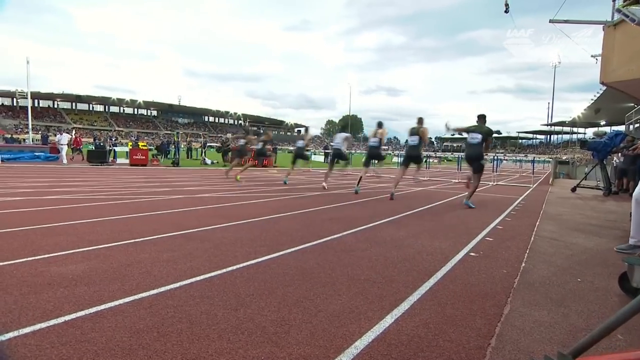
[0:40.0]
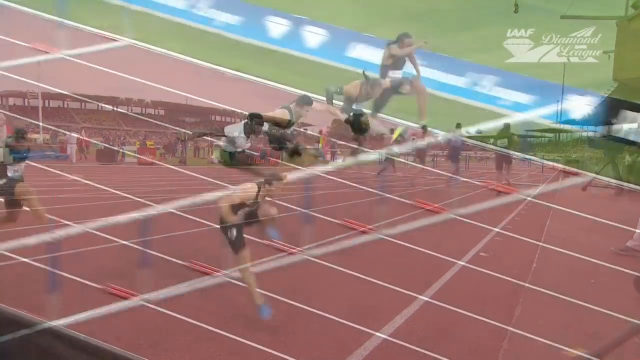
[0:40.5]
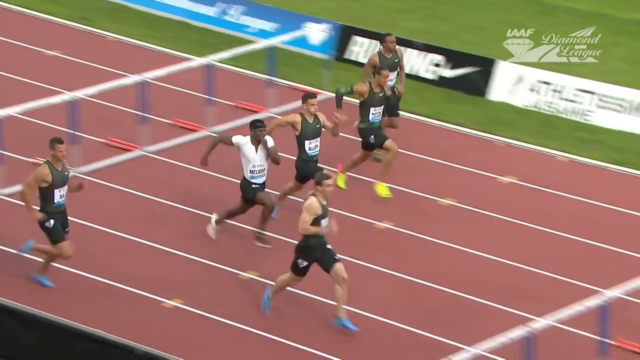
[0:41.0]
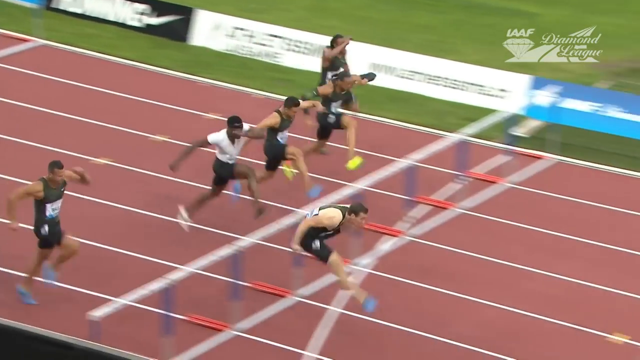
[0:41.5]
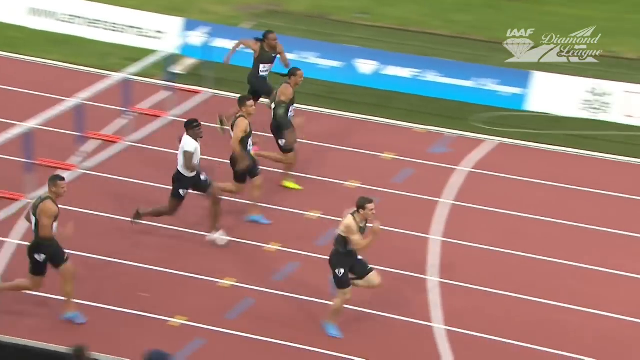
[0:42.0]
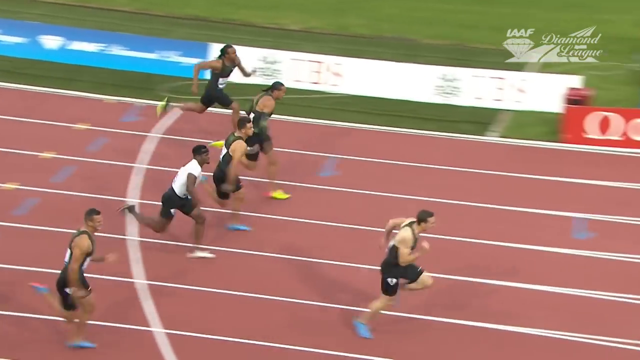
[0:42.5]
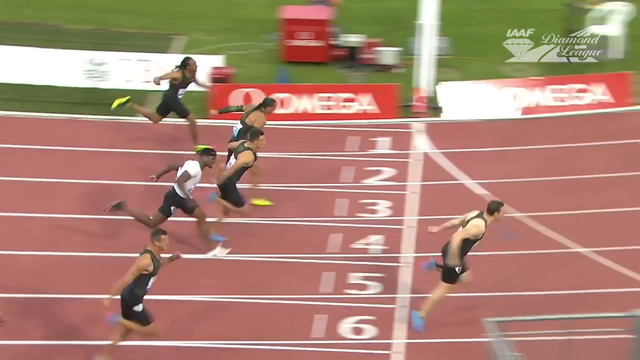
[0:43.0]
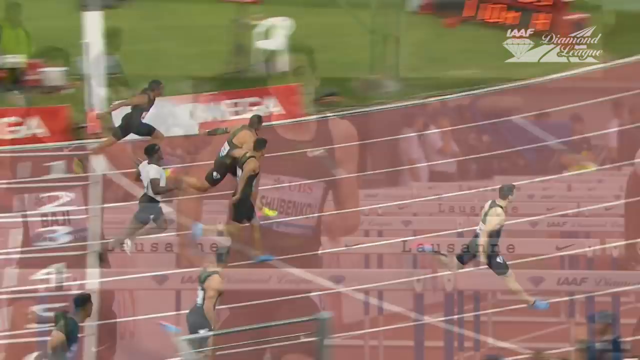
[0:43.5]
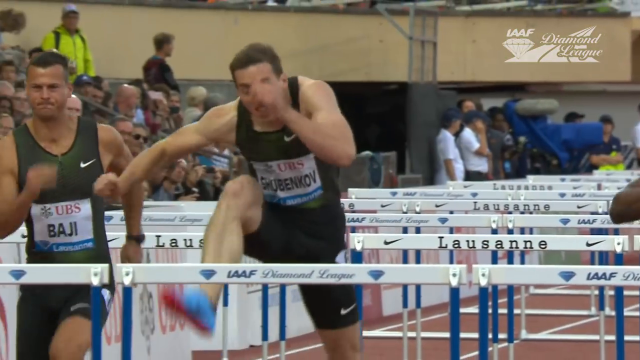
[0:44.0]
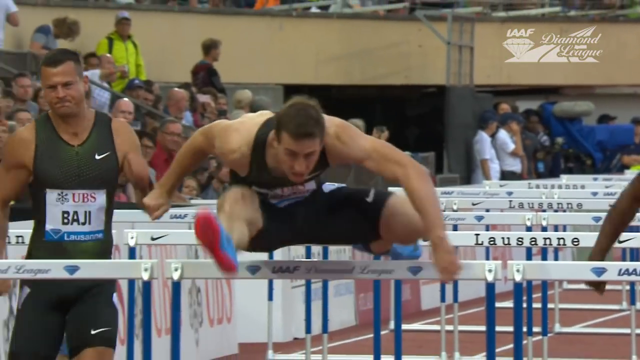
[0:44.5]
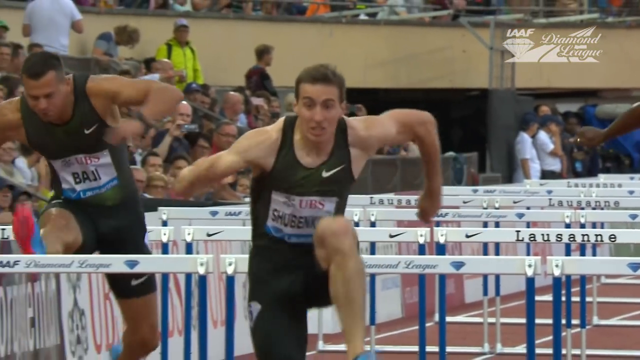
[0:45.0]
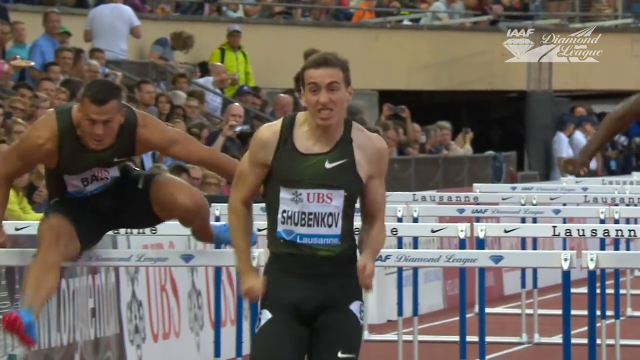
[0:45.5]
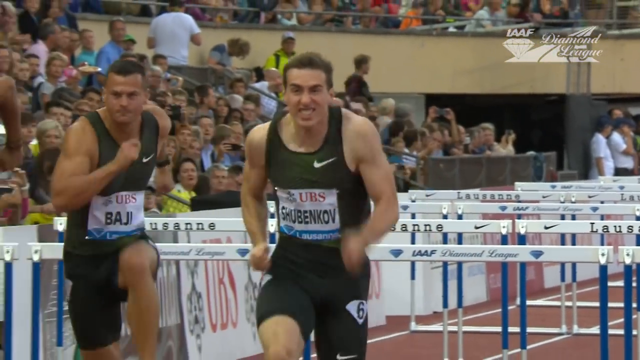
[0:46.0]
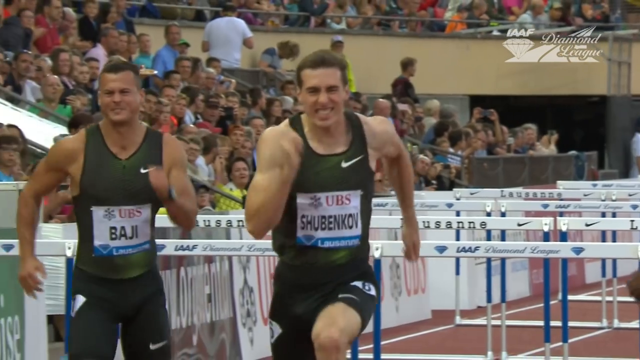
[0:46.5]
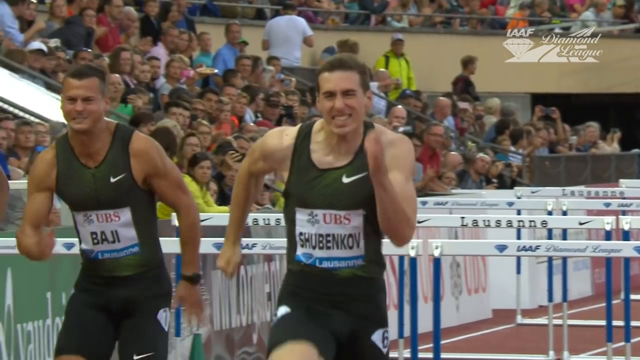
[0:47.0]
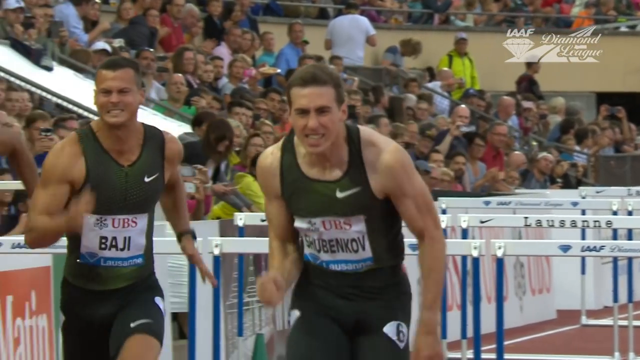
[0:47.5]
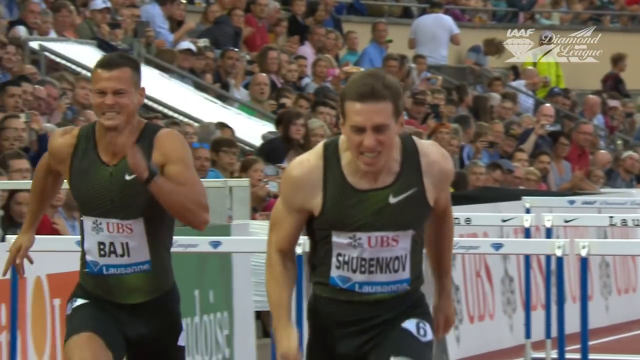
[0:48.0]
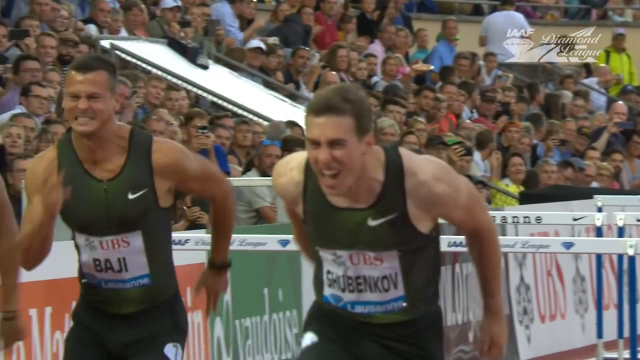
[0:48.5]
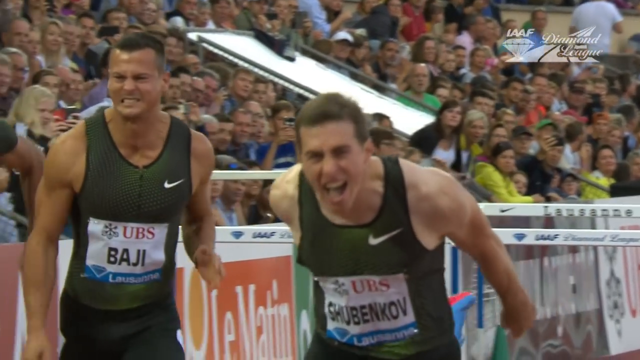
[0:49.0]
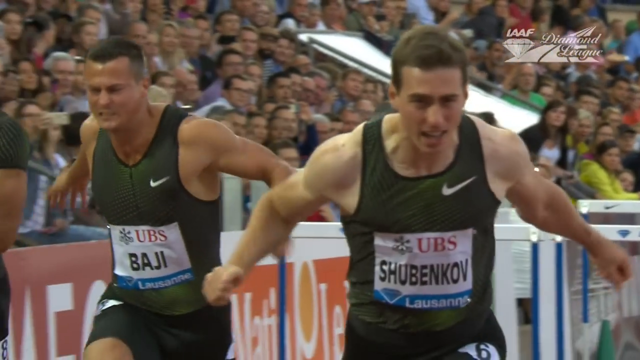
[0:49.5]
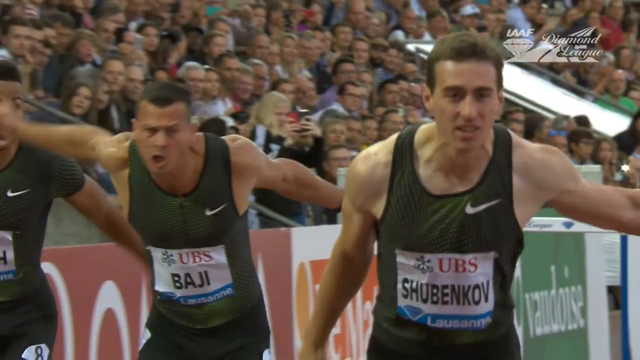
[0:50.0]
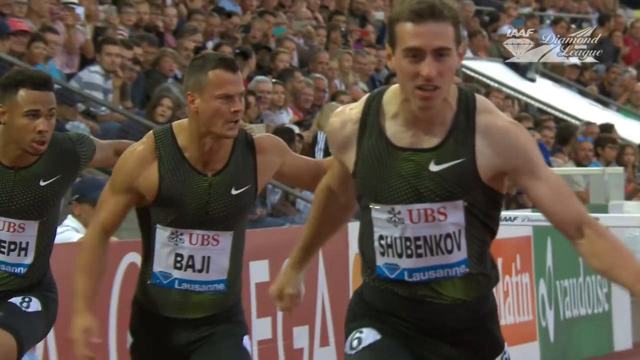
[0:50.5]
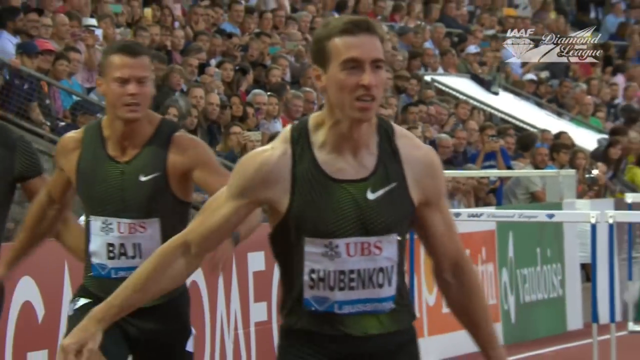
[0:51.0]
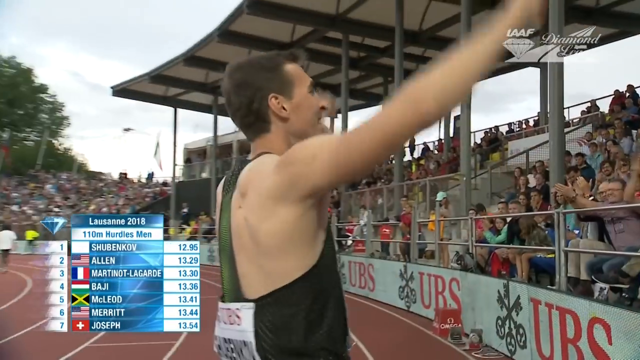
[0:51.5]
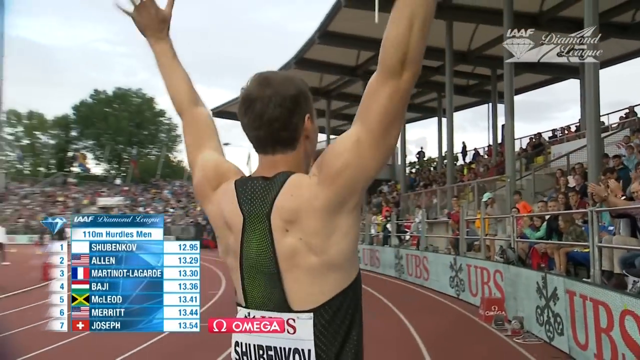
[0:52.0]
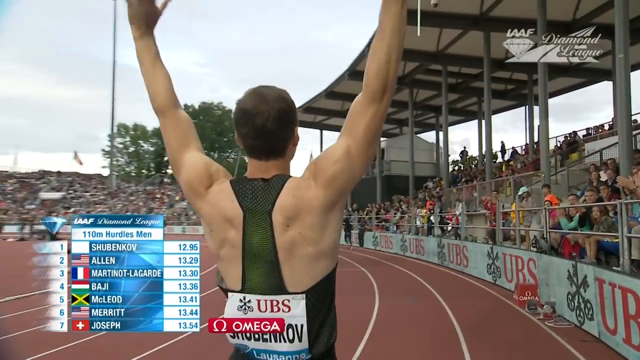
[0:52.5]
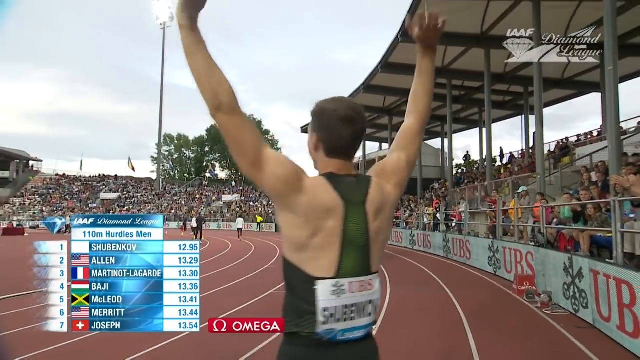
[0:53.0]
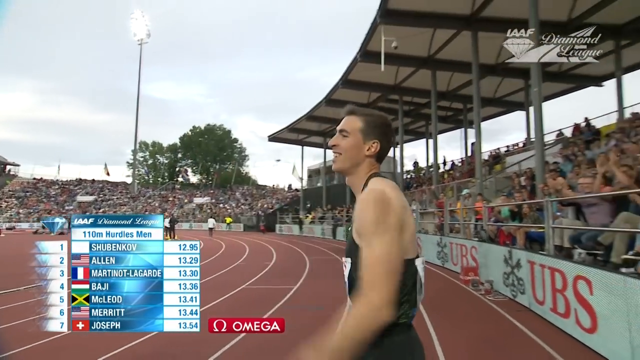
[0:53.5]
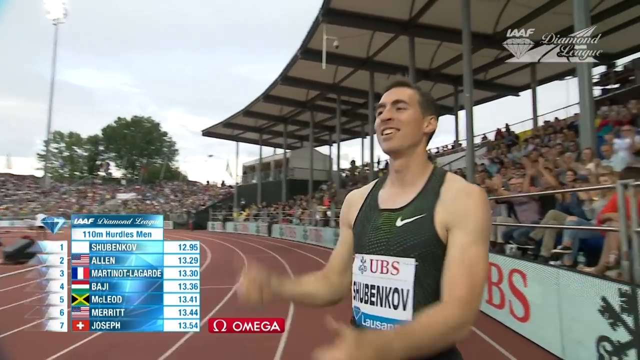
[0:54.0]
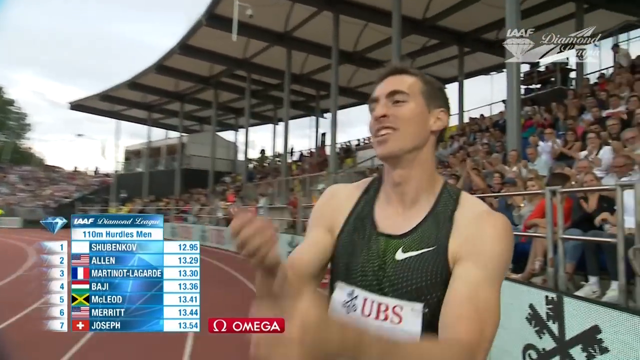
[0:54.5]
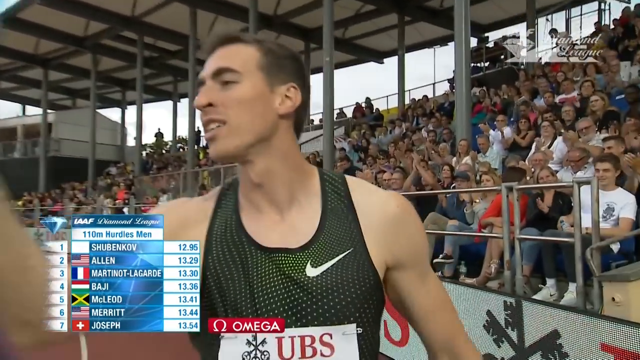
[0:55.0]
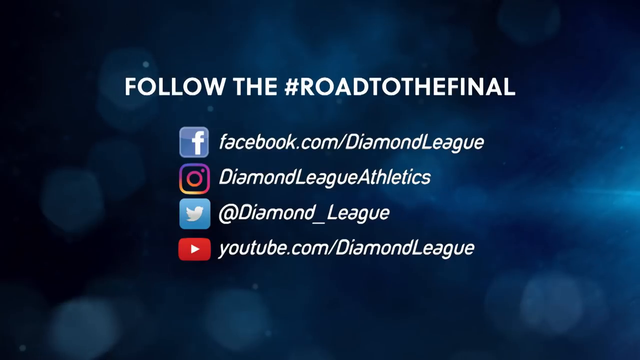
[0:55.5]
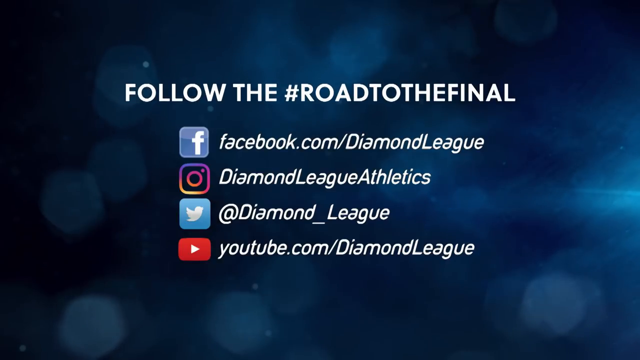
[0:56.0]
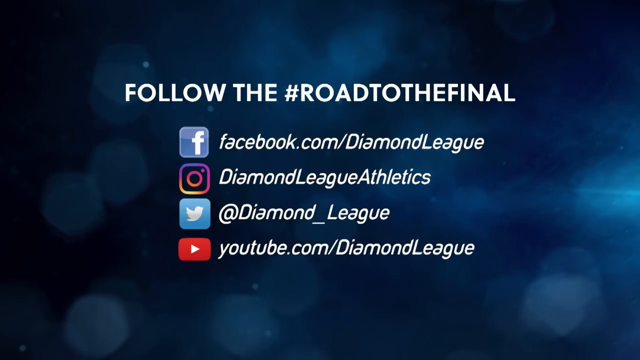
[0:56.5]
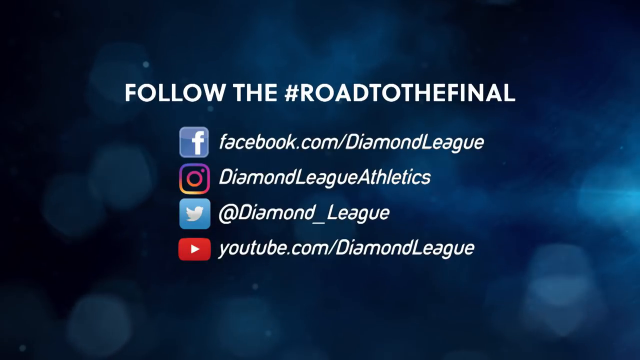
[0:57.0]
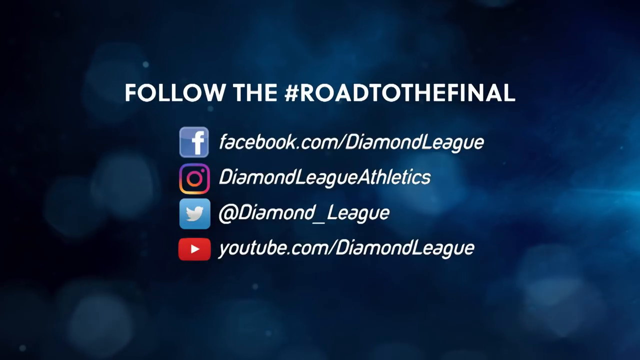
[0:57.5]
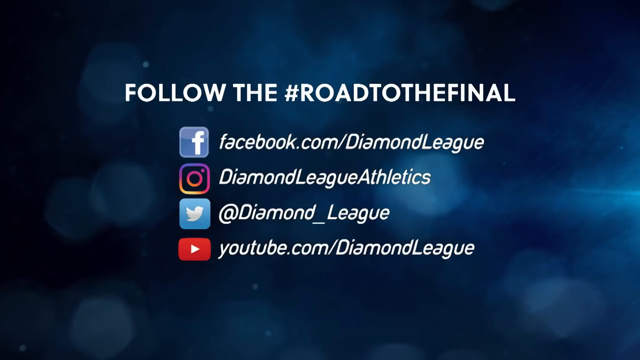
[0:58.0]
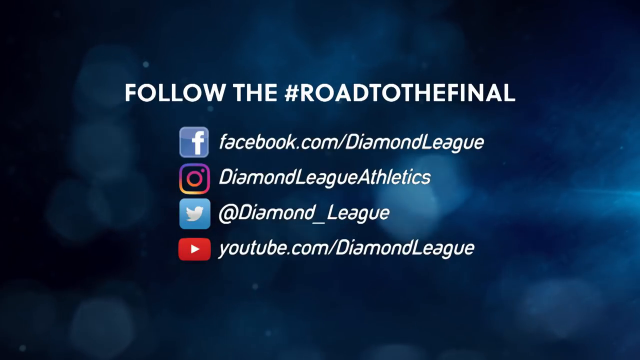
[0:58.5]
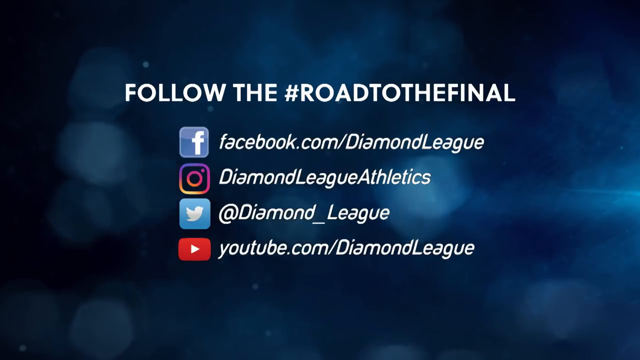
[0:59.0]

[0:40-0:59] One man, apparently the one in first place, waves his hand and blows kisses, seeming happy, apparently because he won the race. Text on screen lists social media pages to follow, including Facebook, Instagram and a youtube.com YouTube channel.